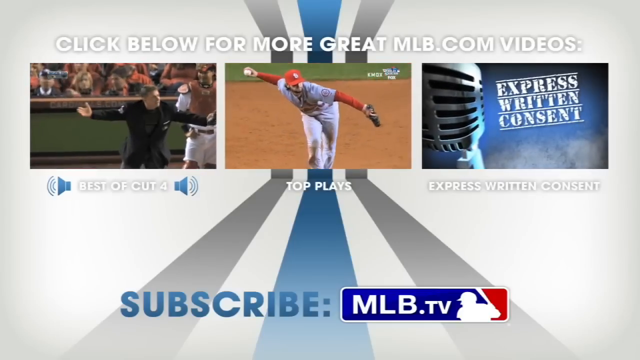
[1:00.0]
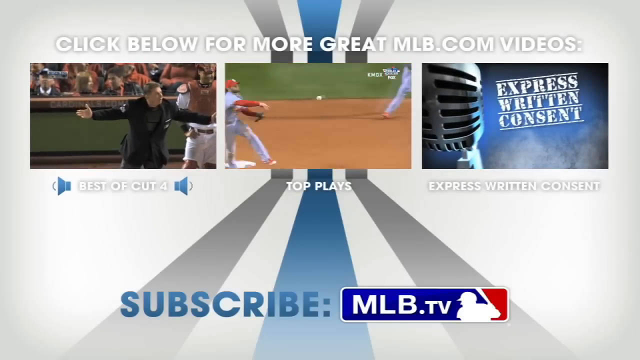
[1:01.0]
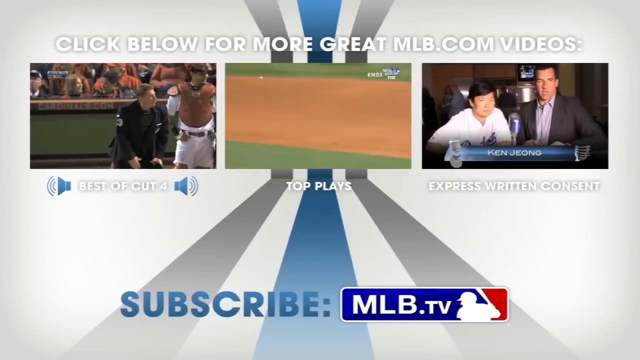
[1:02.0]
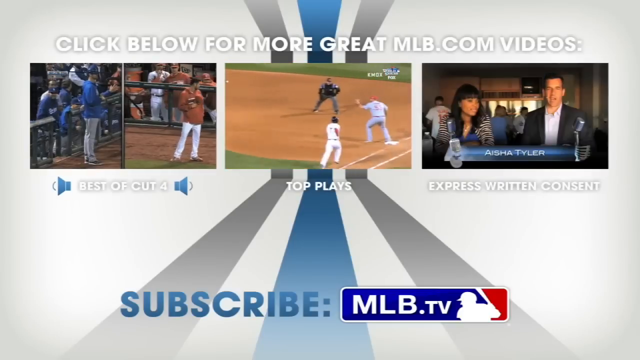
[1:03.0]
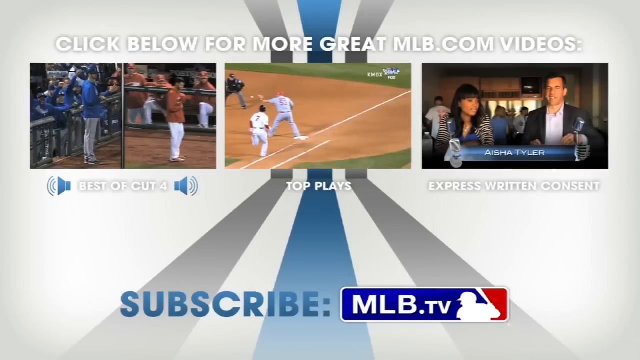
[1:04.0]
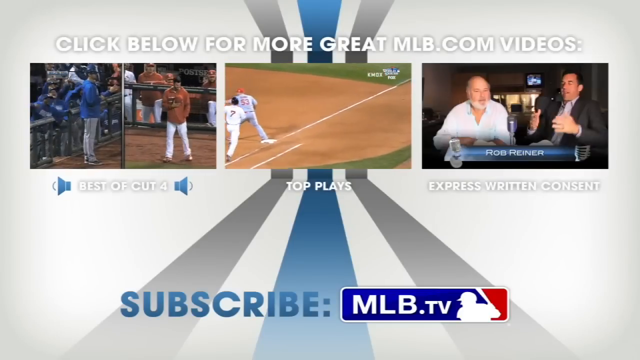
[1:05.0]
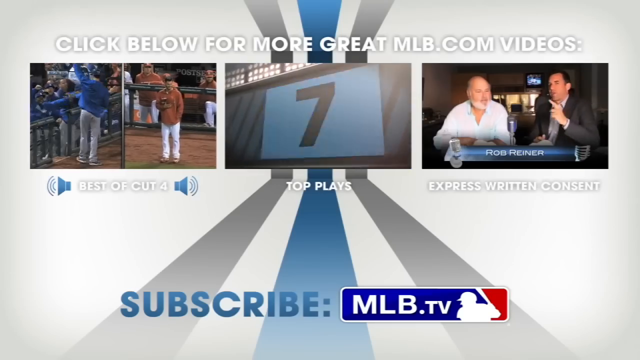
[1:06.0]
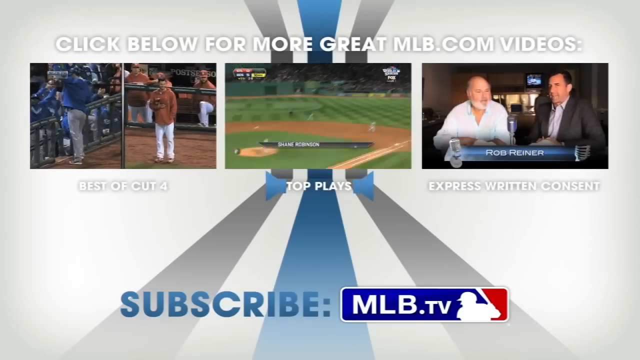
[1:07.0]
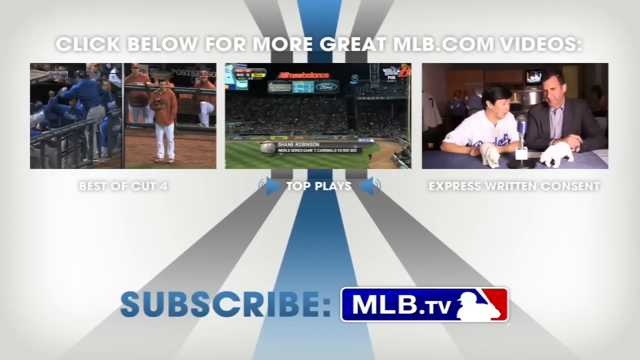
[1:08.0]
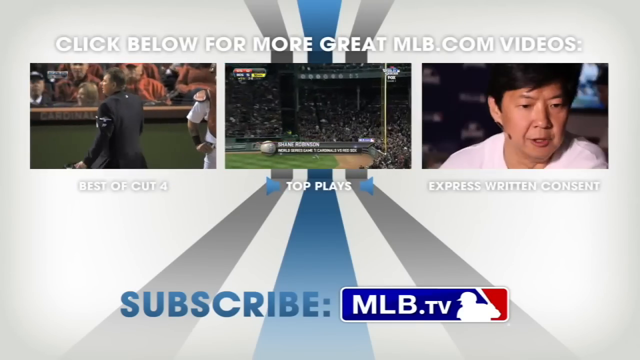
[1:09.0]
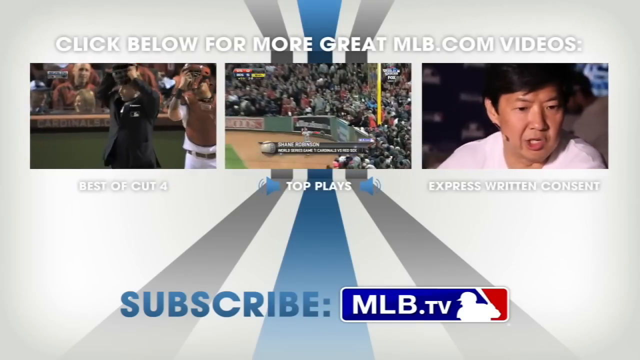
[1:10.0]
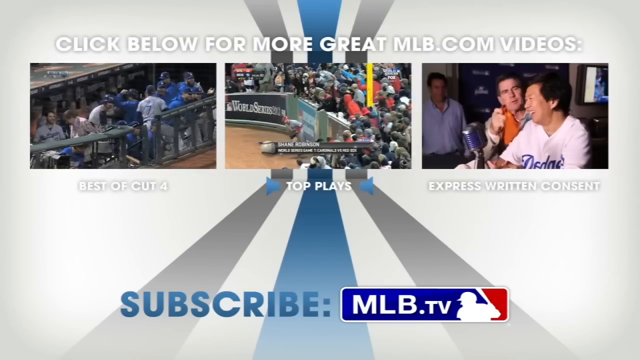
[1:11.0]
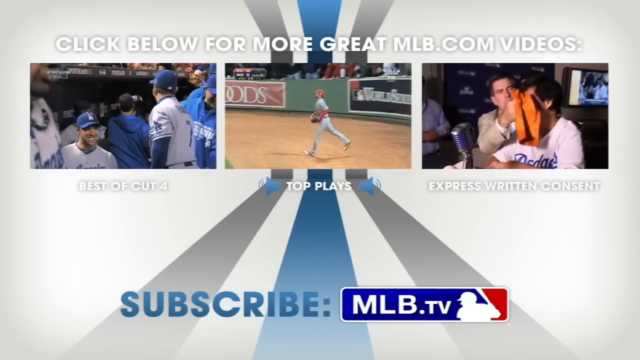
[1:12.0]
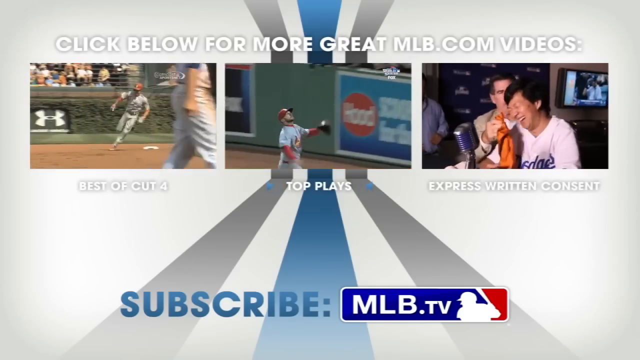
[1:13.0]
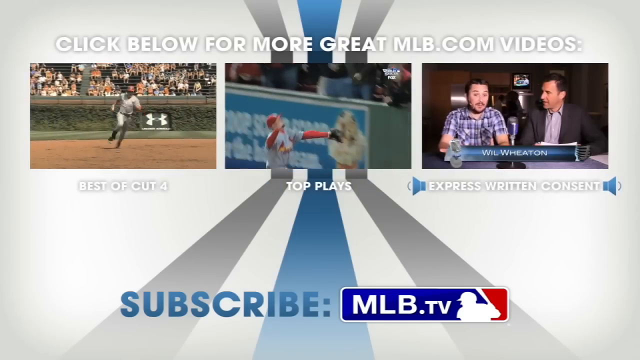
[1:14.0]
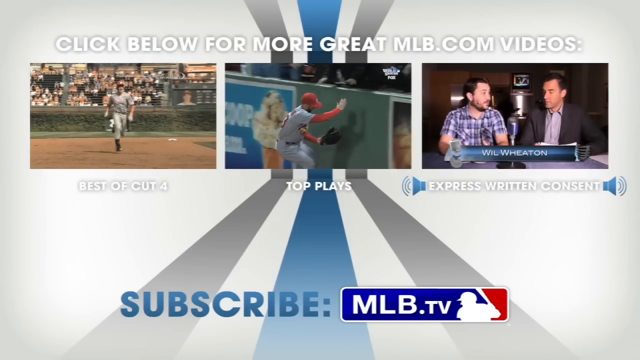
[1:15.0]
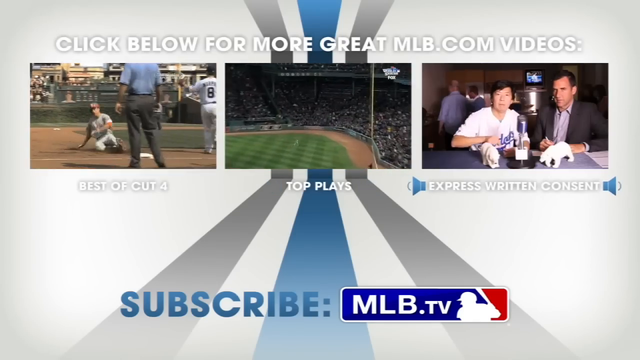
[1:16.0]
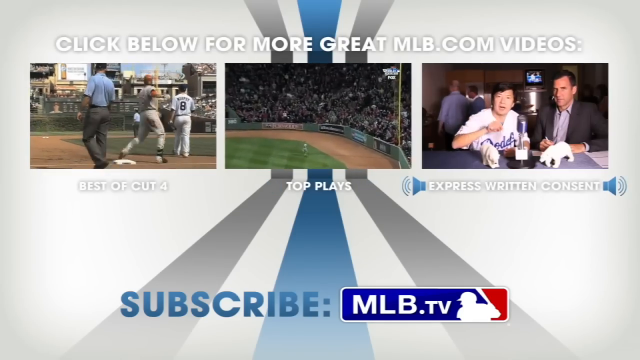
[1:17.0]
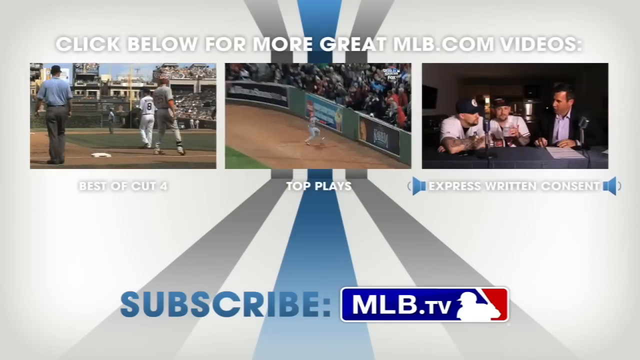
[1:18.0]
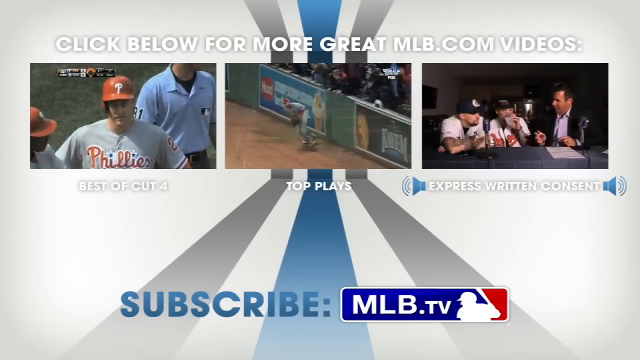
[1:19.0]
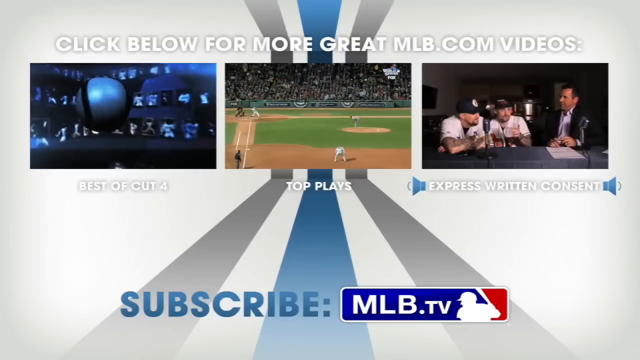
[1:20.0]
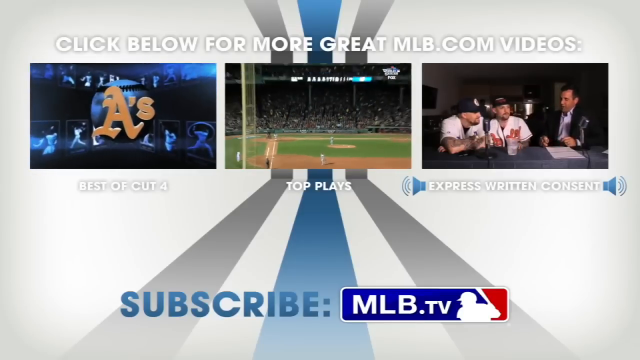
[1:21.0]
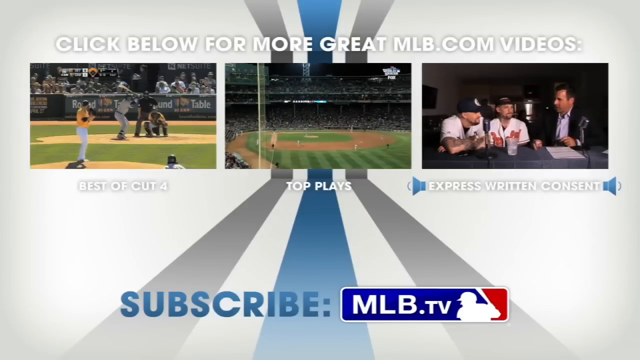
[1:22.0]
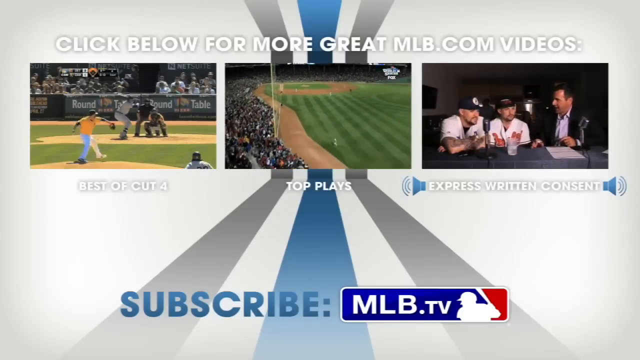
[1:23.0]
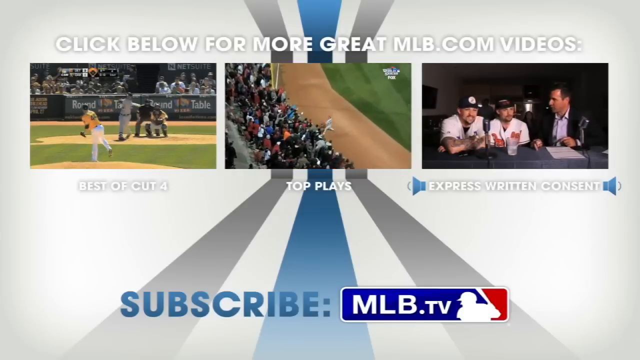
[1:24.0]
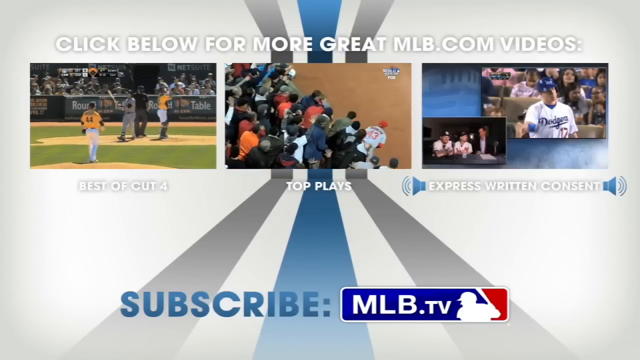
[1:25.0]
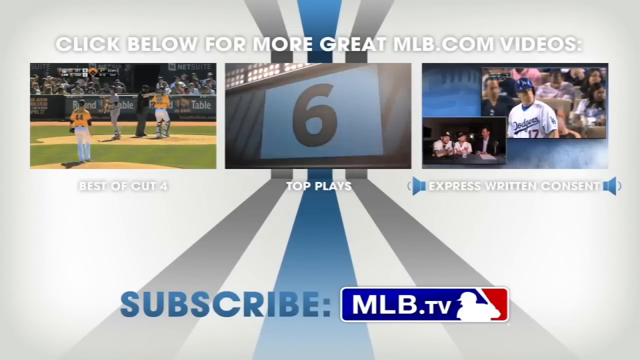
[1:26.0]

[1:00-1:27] A still screen shows three still video clips centered at the top. The one on the left shows an umpire in action, dressed in black, with his arms spread wide. The middle one shows a pitcher mid-swing, his arm and the baseball behind him to the right and his body positioned forward before the throw. The third shows a close-up of a steel microphone with the text "Express Written Consent". Below the clips, from left to right, the labels read "Best of Cut 4", "Top Plays" and "Express Written Consent". At the bottom is "SUBSCRIBE:" in all capital letters, followed by the red, white and blue MLB.TV logo with the outline of a baseball player. The clips then begin playing simultaneously, toggling through different plays of the game or different interviews during the game.